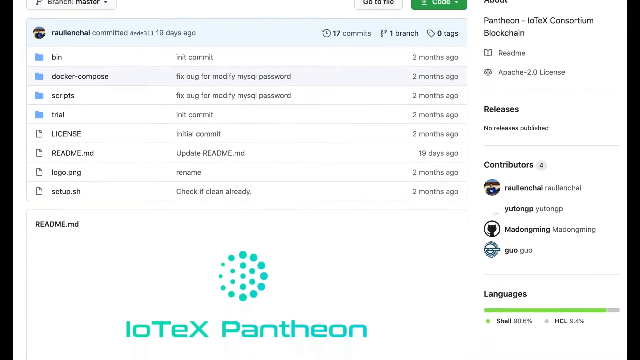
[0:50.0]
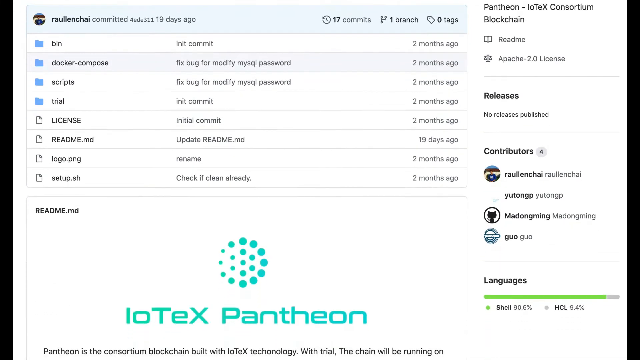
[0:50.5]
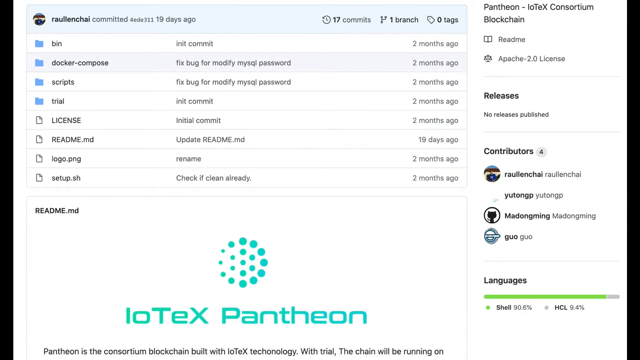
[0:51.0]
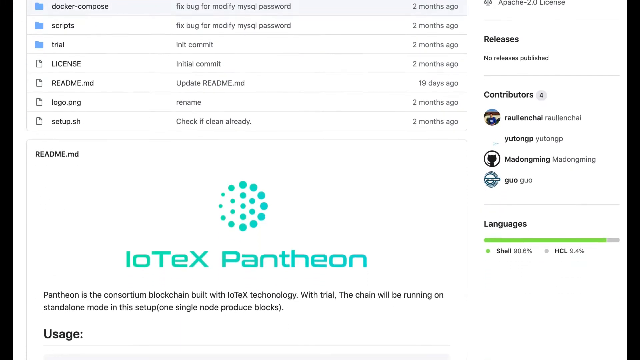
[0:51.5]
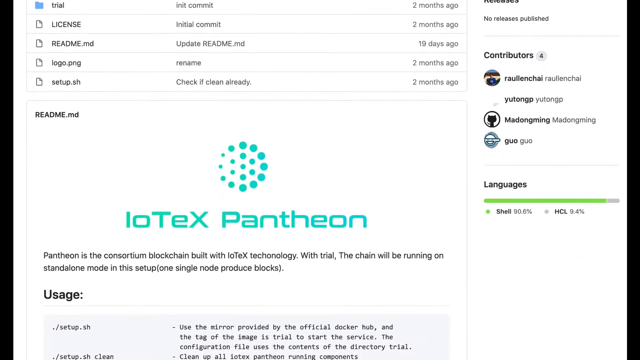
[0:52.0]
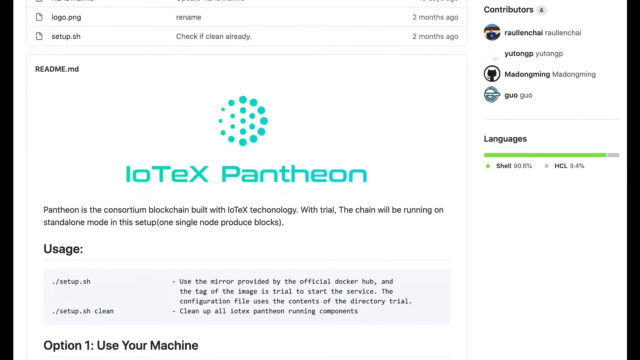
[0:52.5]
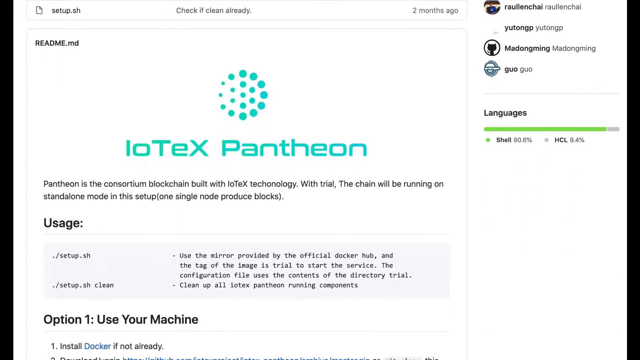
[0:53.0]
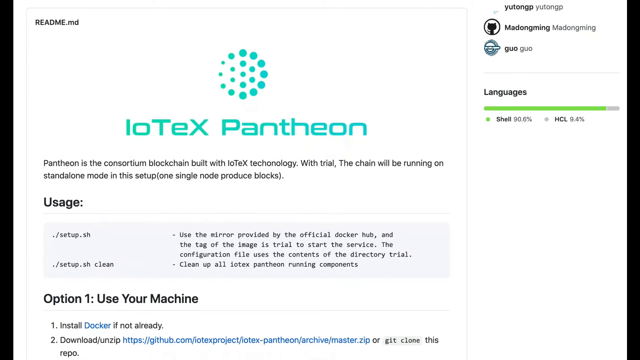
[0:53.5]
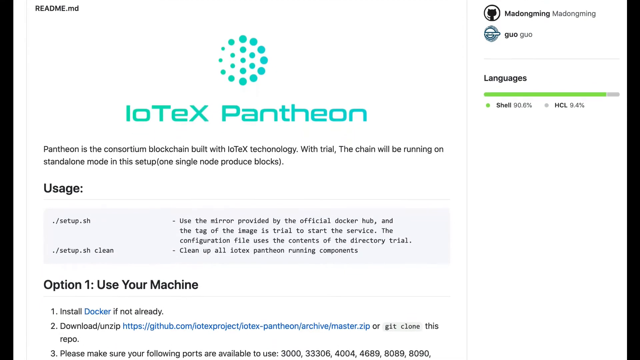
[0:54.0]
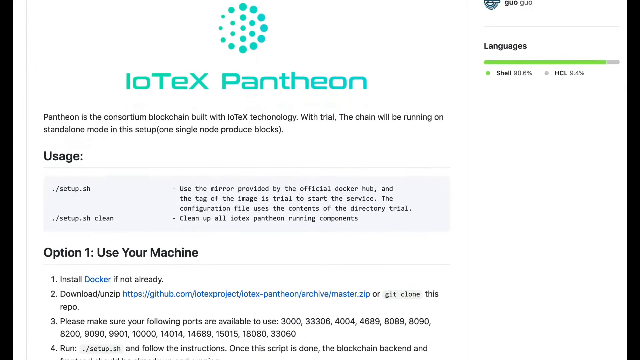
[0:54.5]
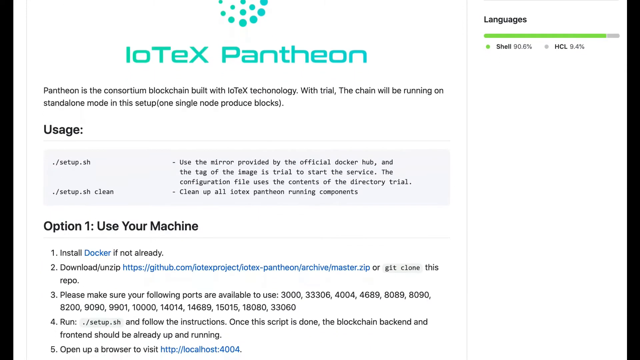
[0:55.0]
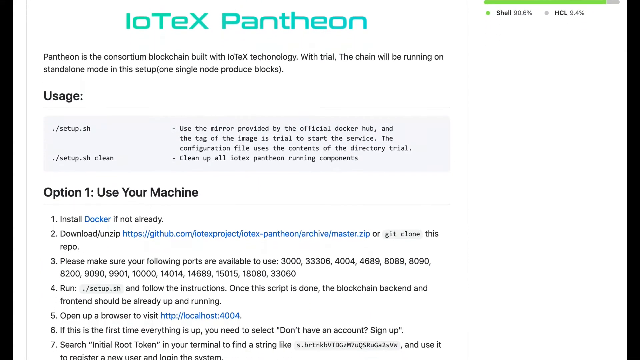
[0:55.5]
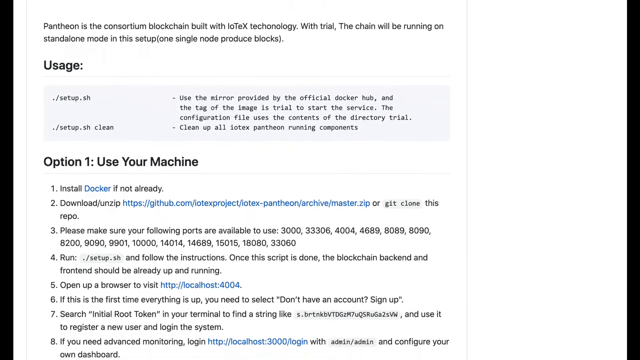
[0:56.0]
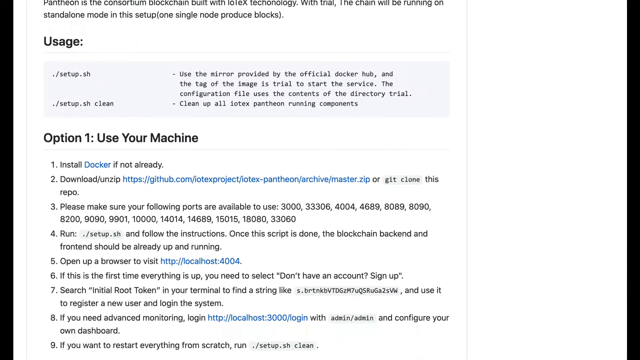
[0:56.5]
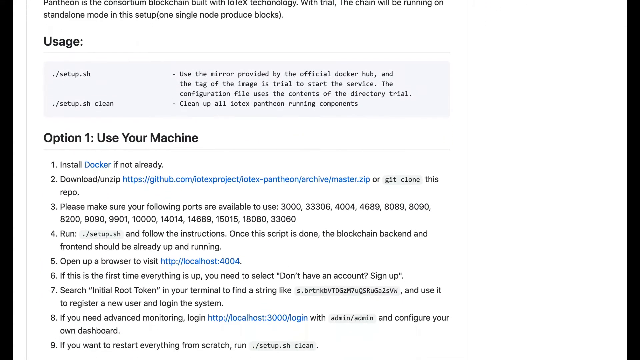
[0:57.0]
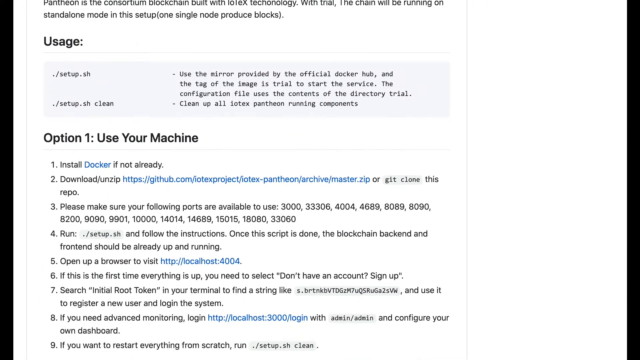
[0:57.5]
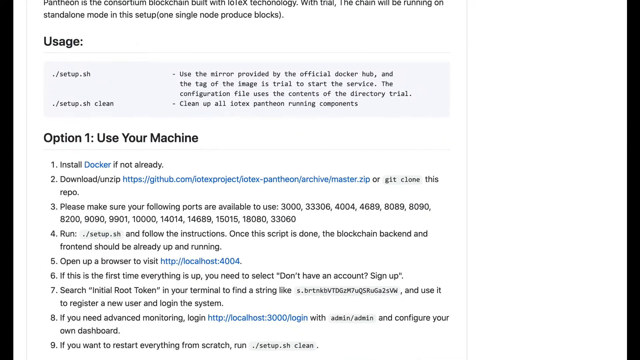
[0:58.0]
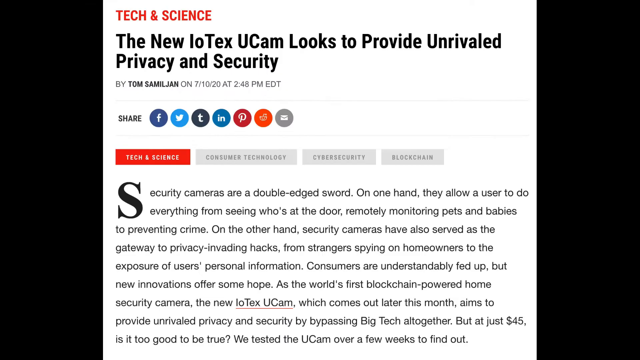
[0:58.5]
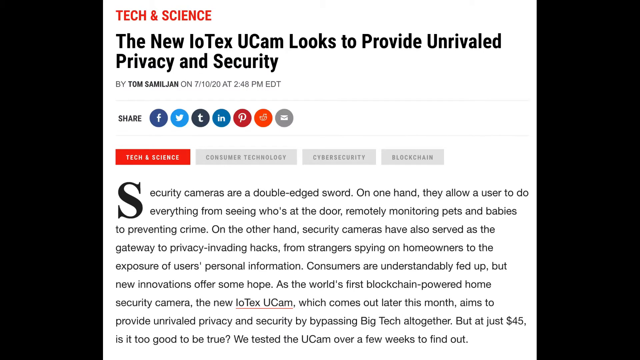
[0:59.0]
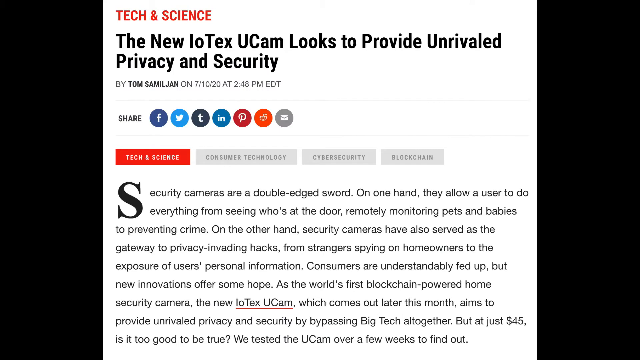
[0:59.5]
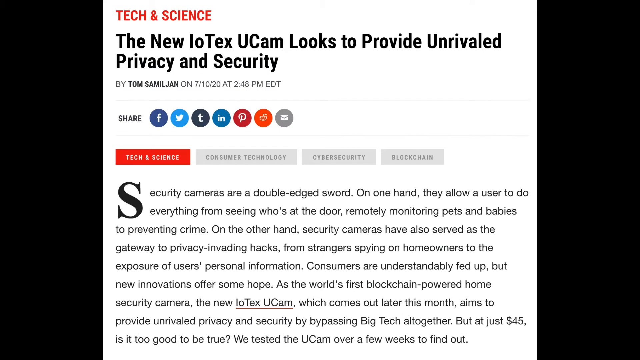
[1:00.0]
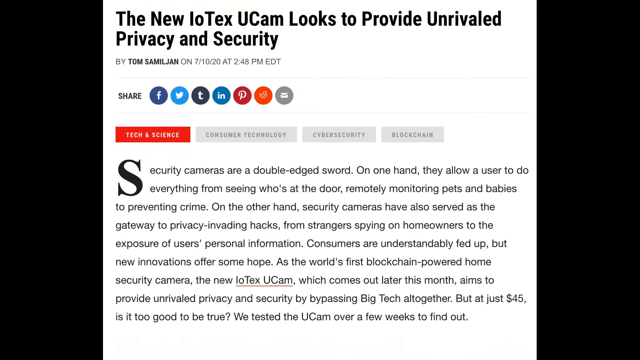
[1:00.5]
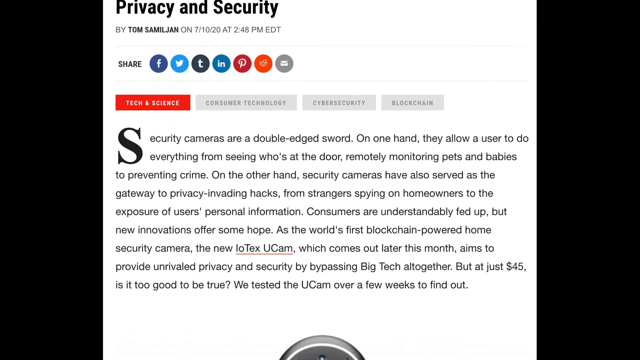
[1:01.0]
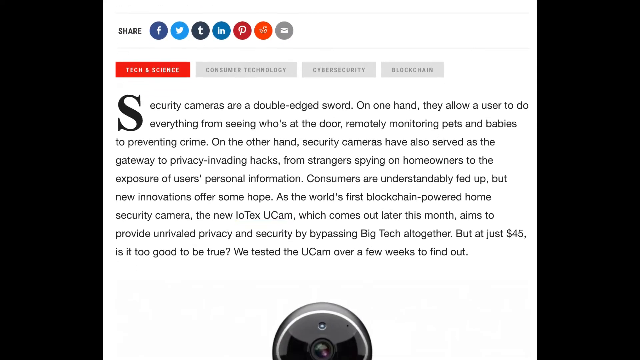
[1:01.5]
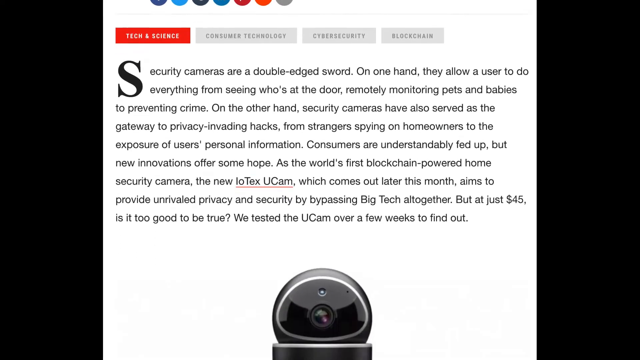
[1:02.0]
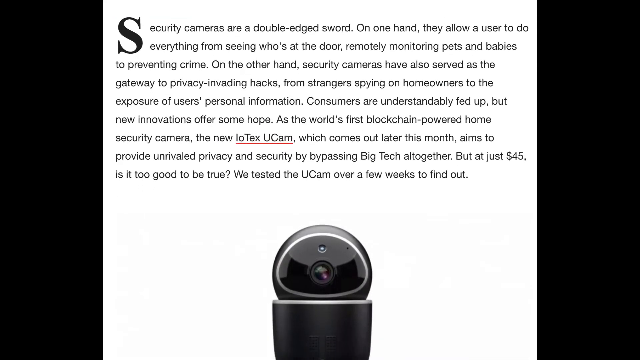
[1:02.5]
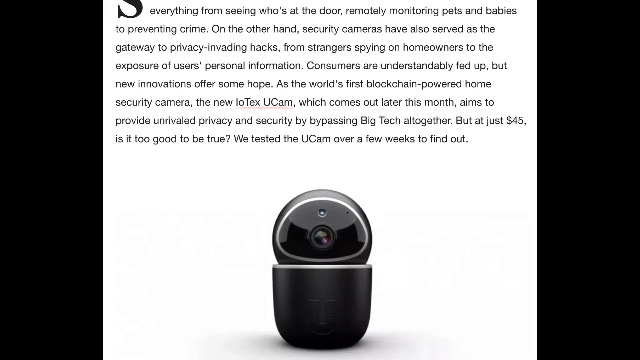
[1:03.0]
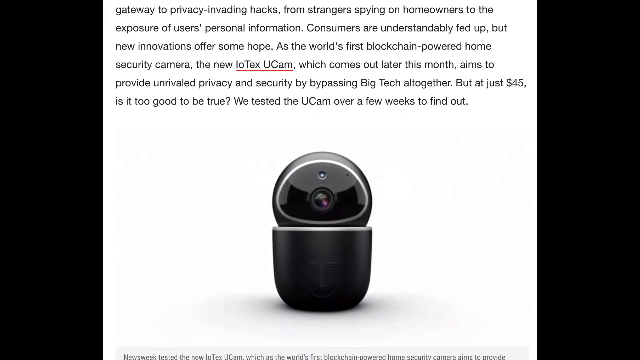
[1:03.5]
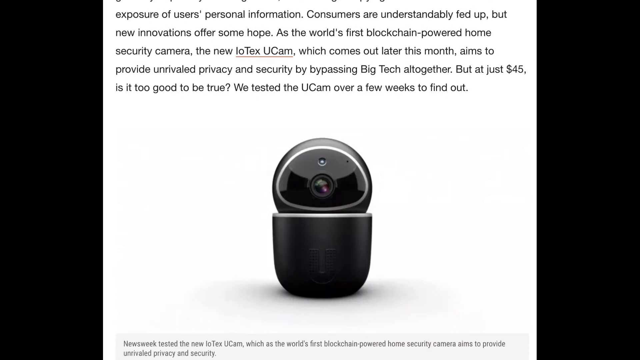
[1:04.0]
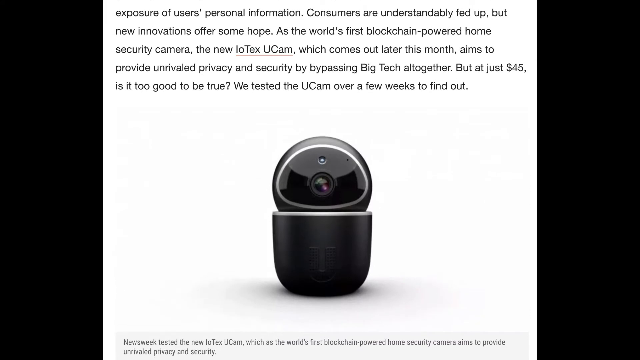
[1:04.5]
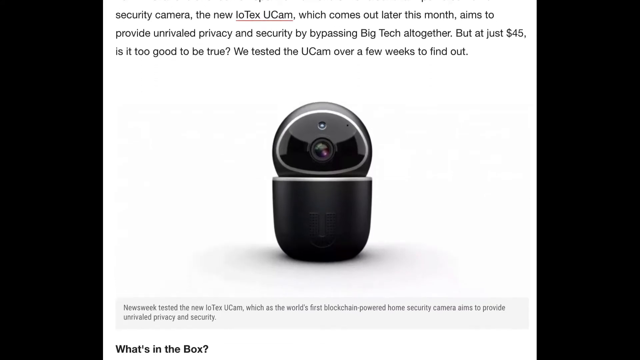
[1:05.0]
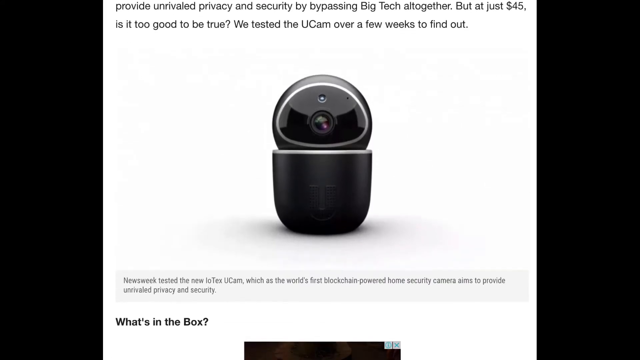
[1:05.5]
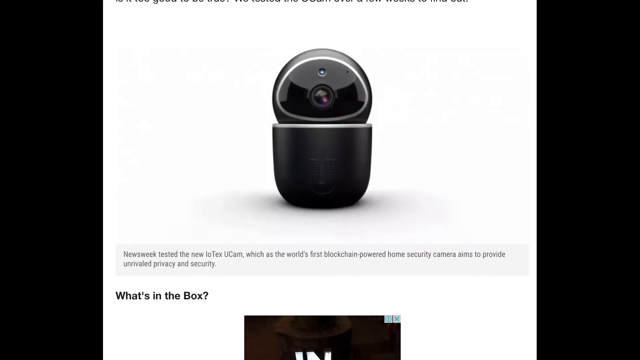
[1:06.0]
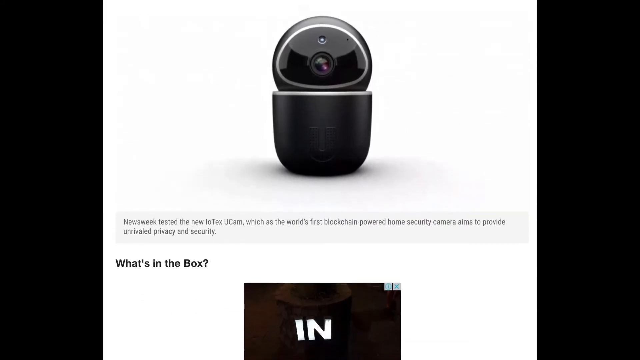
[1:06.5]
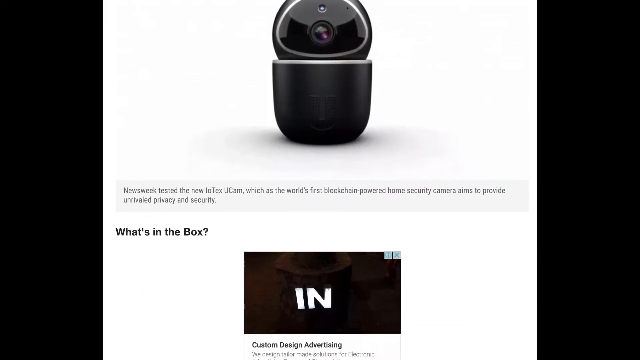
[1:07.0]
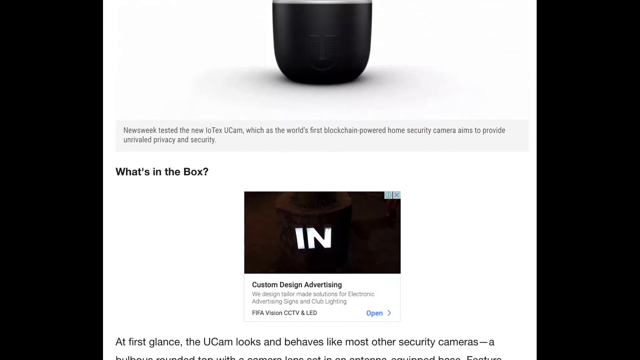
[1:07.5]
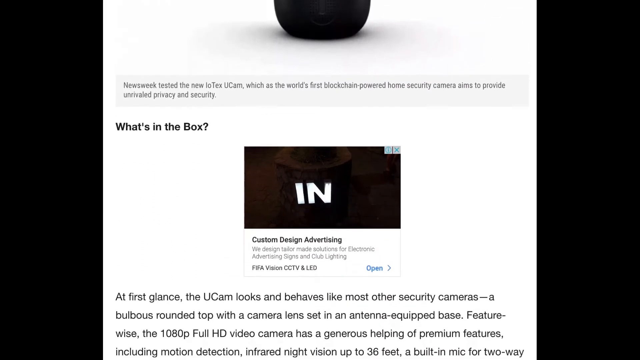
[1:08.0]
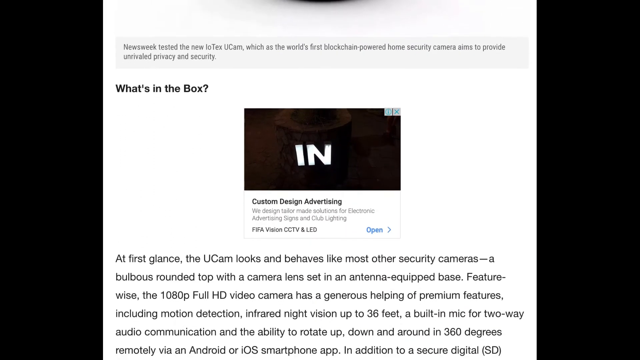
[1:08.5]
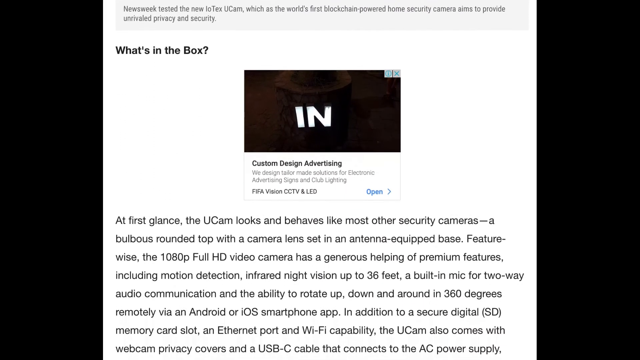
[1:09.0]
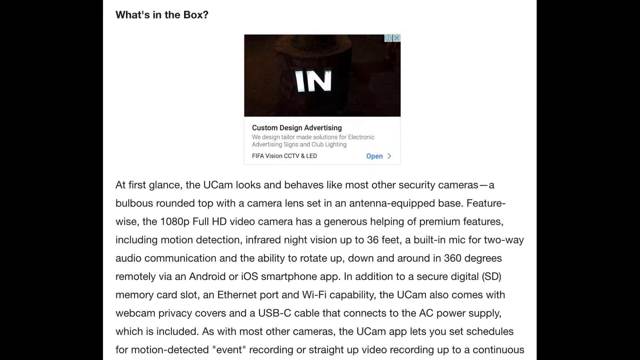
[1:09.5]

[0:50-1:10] The GitHub page apparently continues to be slowly scrolled down, reaching a section where IoTeX is displayed with the logo at the top and text at the bottom in a bright, highlighter-blue kind of color. The screen keeps scrolling down to a new page with some code and options, including "Option one". There is then a quick cut to what looks like a news article, with "Tech and Science" in bright orange at the top. The article's title ends "looks to provide unrivaled privacy and security", with the author's name right below it and a share option for social media sites. It is a fairly standard article with a white background, and its first letter is very large. As the screen continues scrolling down, a kind of camera product appears, probably what the article is about, followed by a heading that asks "what's in the box". The scrolling continues through the rest of the article, which is a block of text.